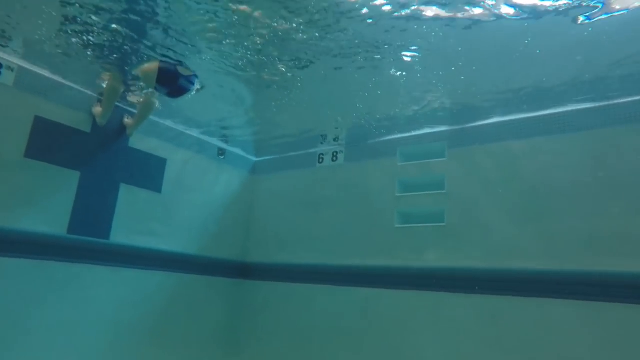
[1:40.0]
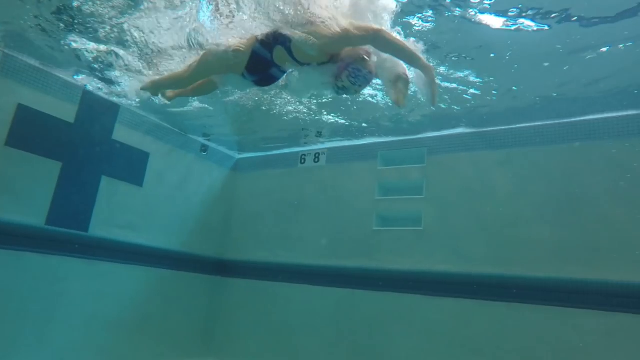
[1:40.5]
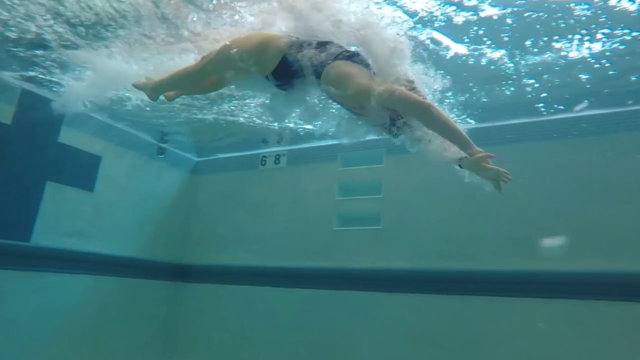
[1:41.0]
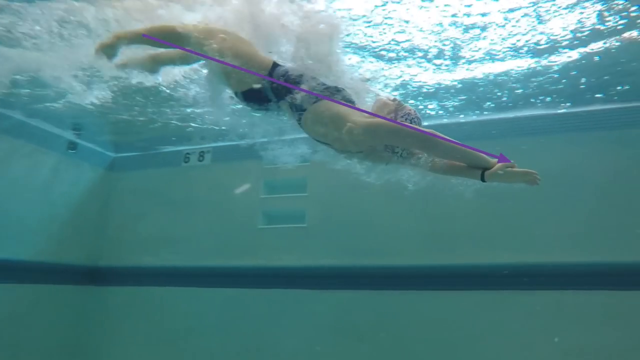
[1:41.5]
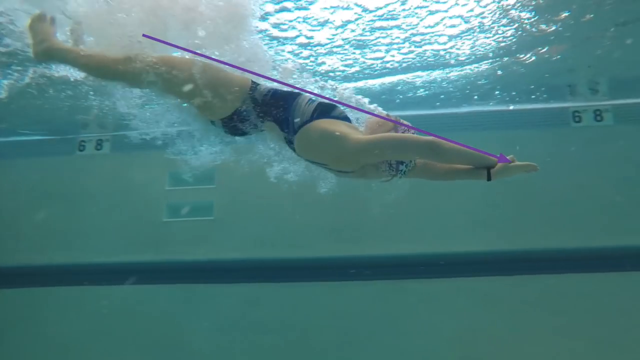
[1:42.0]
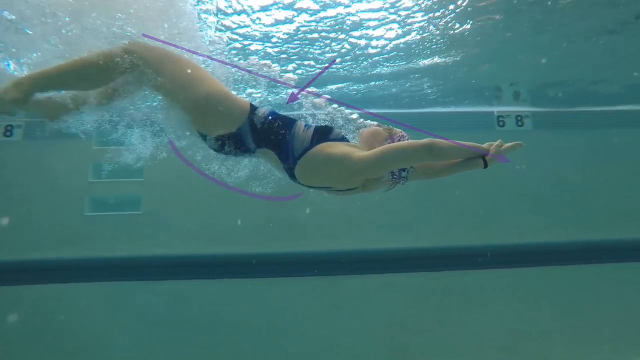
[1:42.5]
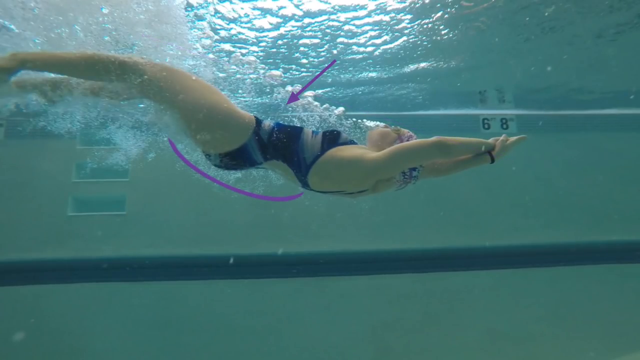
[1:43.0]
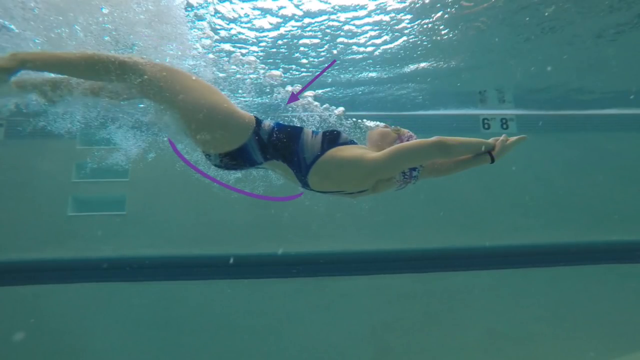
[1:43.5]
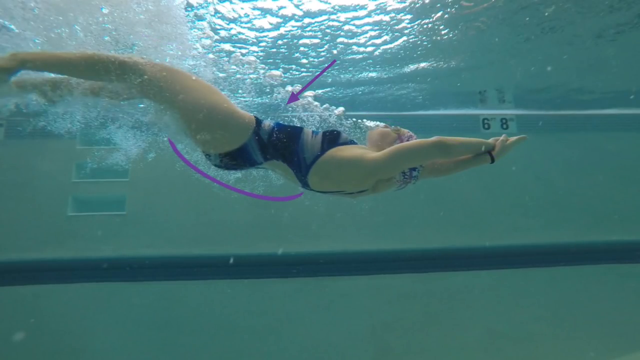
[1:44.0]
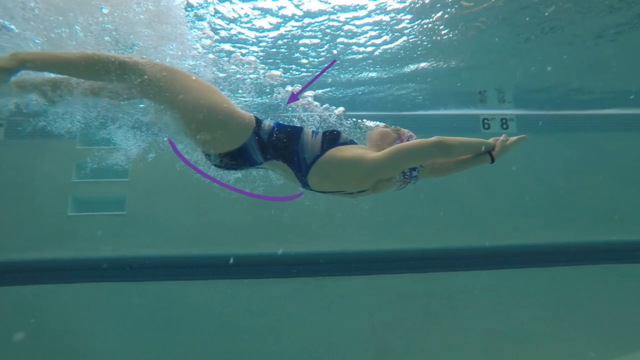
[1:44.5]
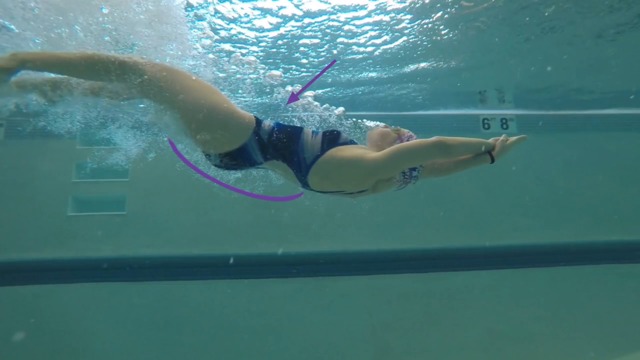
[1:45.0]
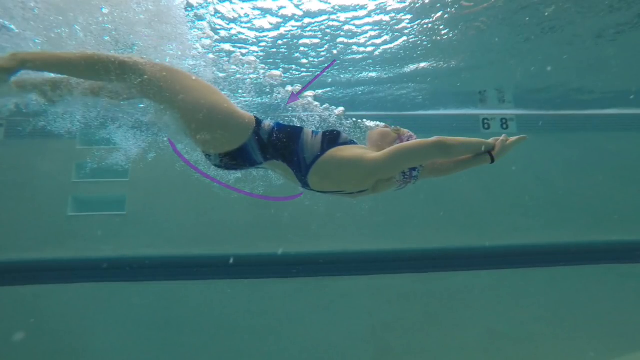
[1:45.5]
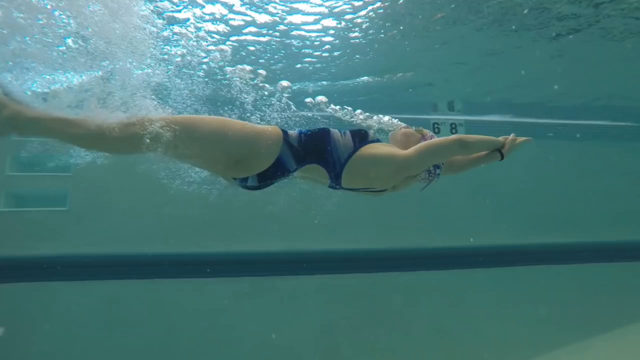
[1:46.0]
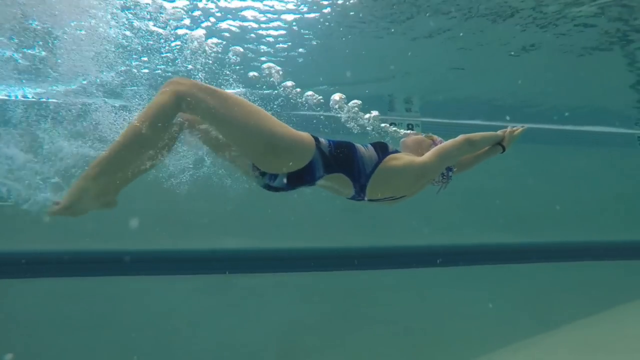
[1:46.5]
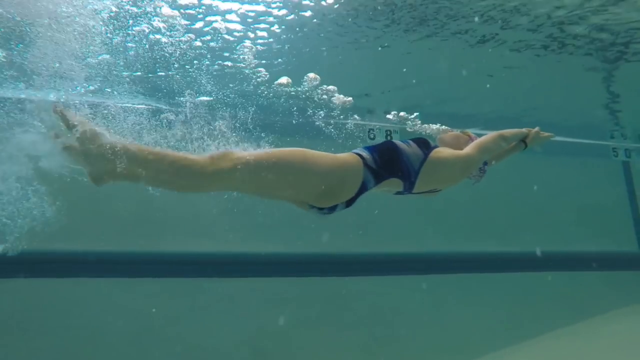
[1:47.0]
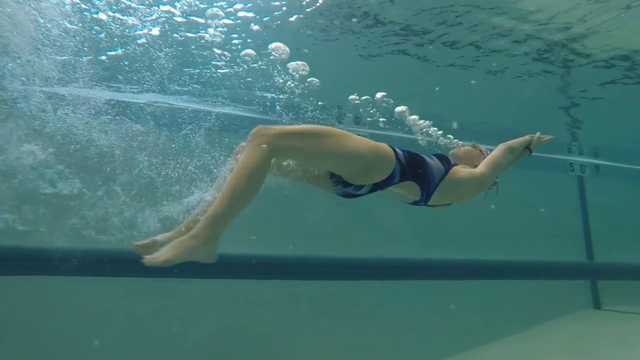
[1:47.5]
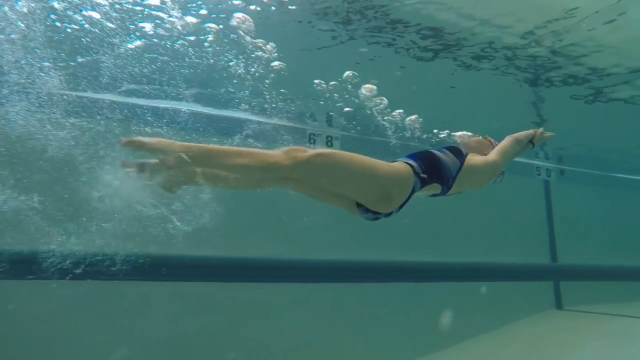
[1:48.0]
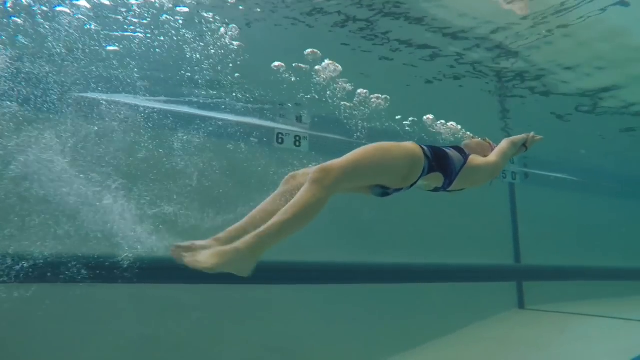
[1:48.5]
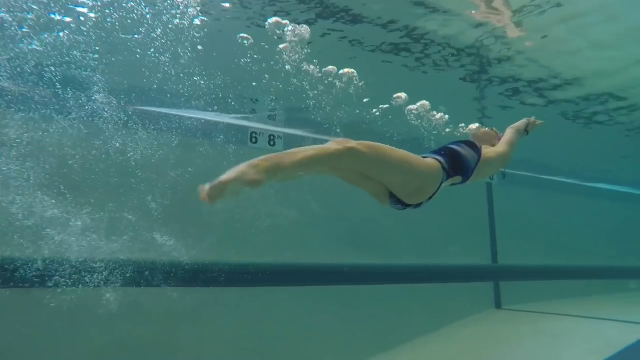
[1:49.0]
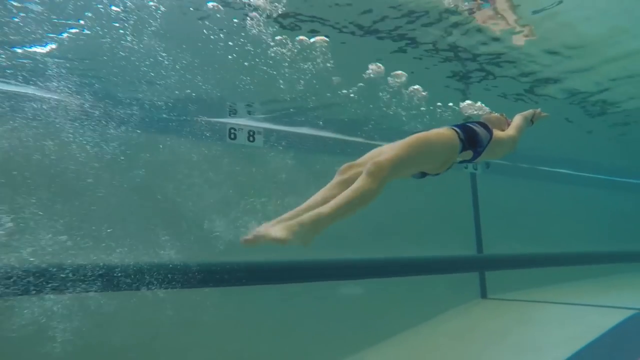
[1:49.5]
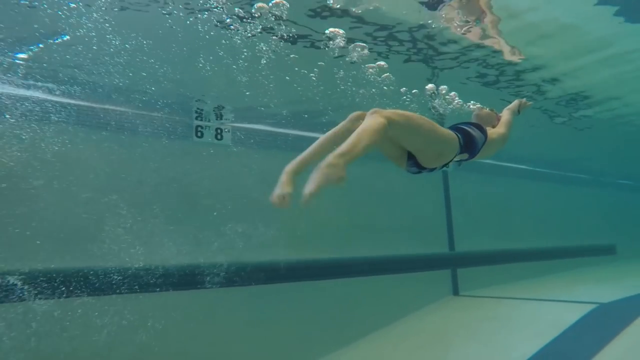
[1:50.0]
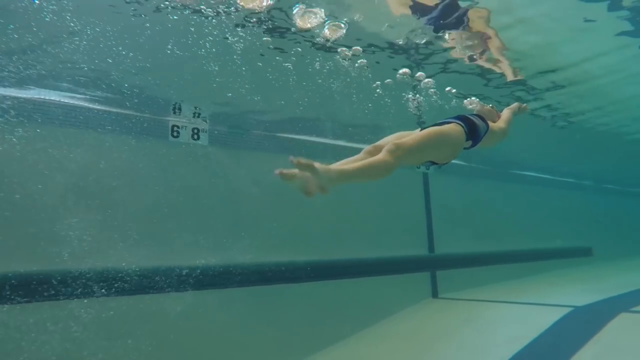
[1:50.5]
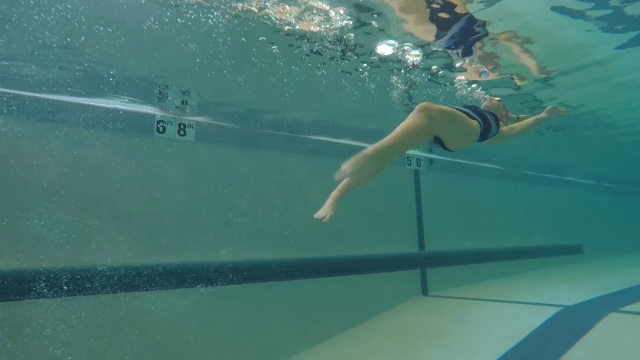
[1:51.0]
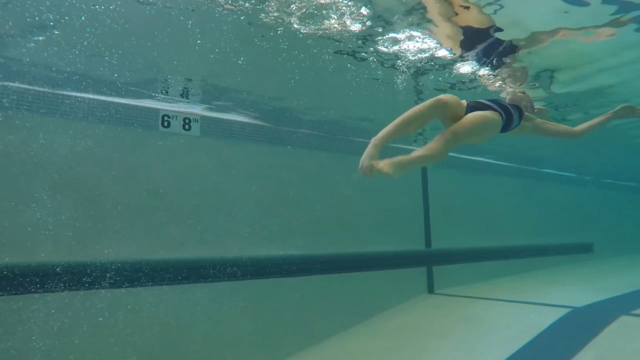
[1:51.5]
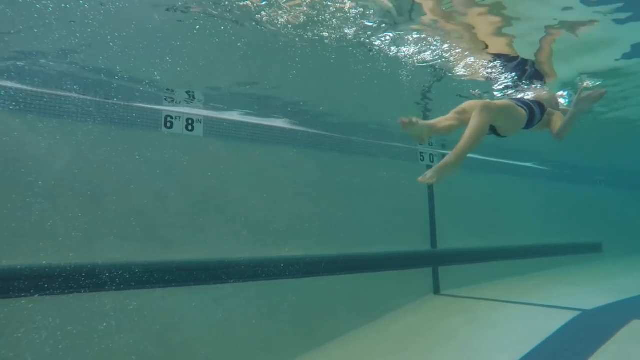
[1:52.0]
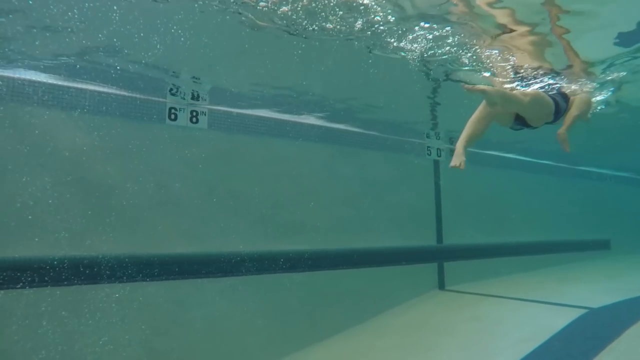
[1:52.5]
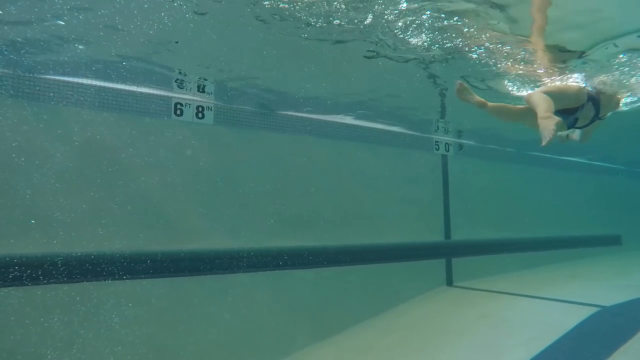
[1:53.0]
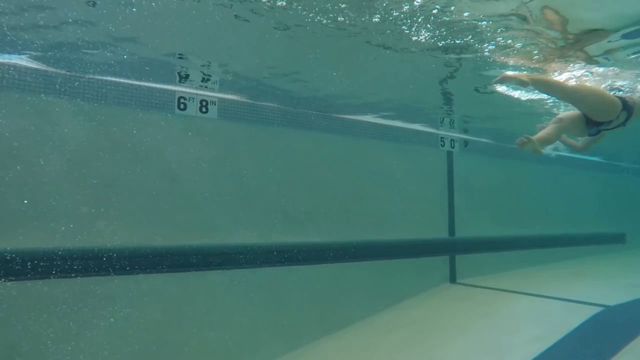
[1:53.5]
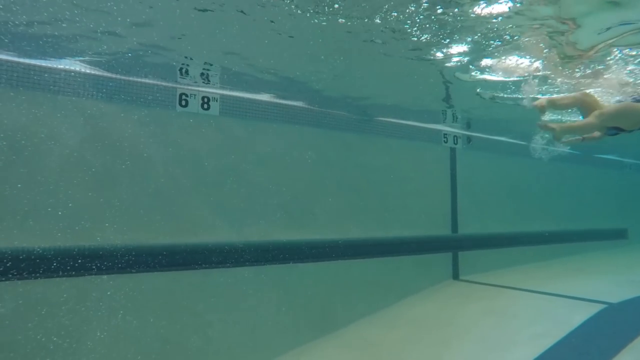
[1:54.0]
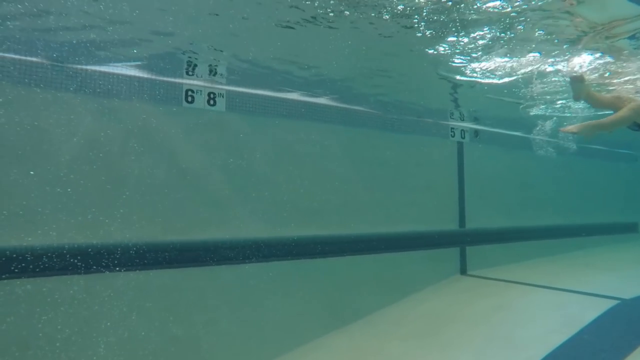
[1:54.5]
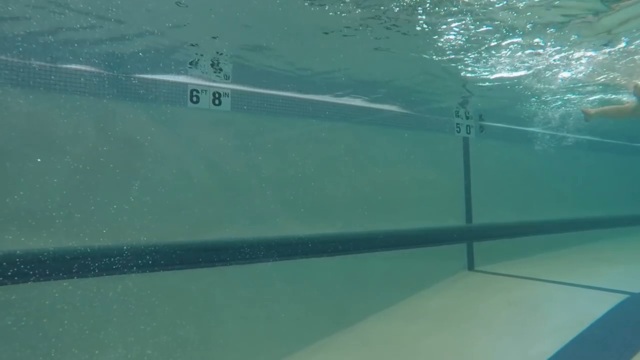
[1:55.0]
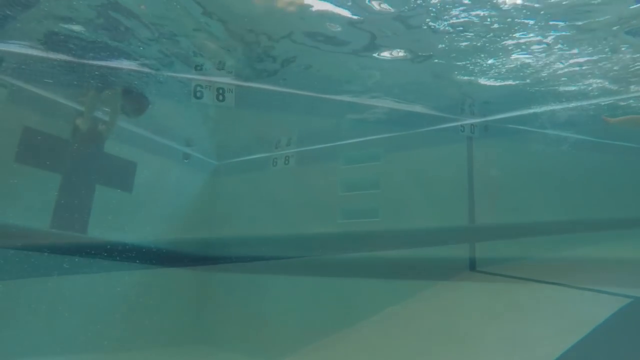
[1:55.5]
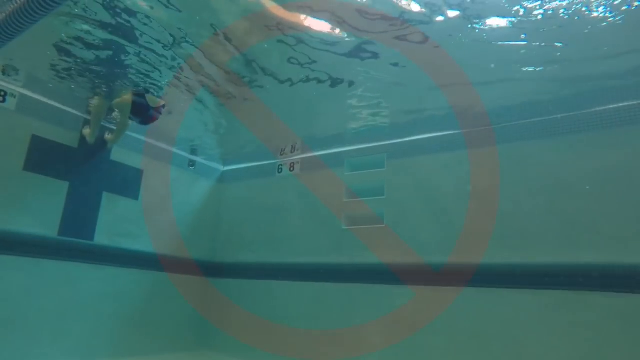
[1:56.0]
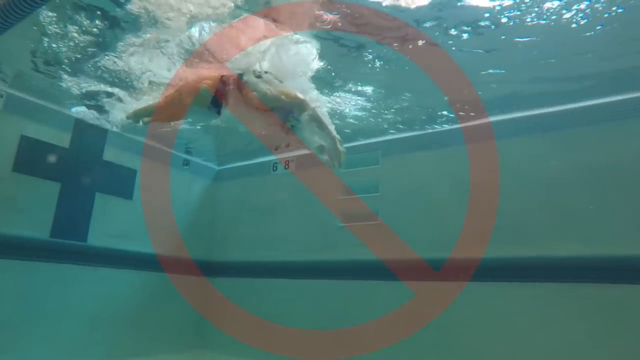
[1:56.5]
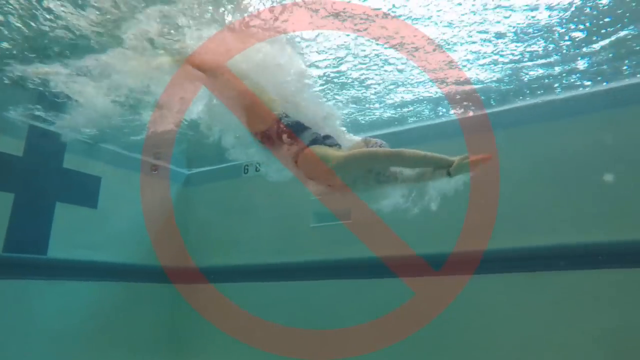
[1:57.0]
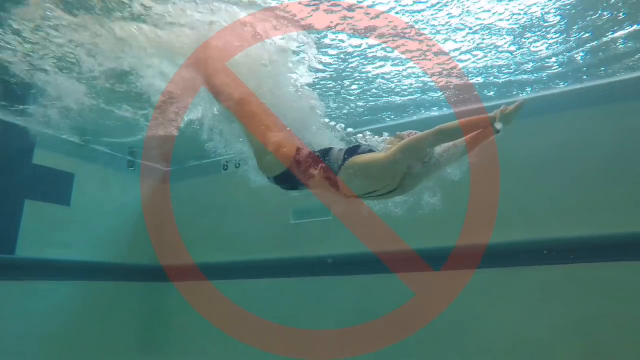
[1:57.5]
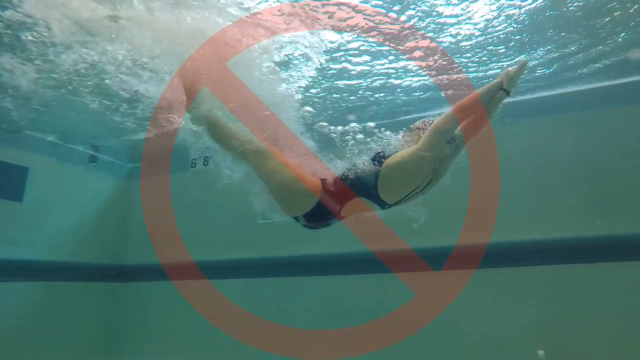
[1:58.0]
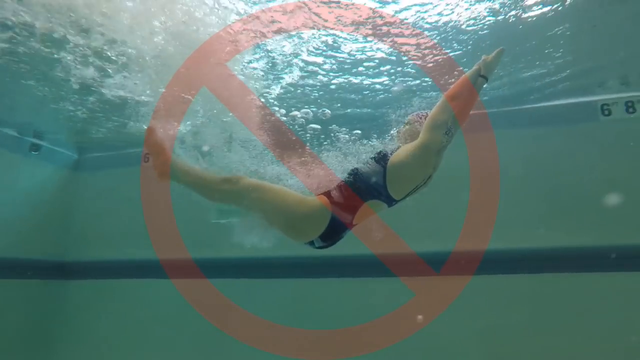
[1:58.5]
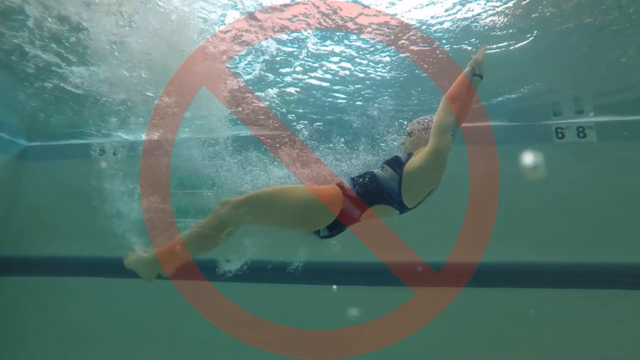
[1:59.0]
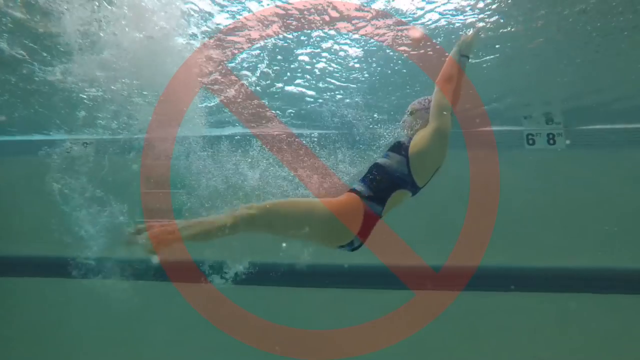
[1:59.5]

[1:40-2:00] The female swimmer is in the water with her feet pressed against the wall, her bottom in the water and her top half out of the water and out of view. She projects herself backward into the water; her top half enters with her arms stretched above her head, her hands clasped one over another with her fingers straight, and her legs straight with toes pointed. A purple line appears across her body, indicating her pencil-like form as she enters the water. It then switches to a rounded line beneath her bottom and spine showing the curvature of her spine, with a purple arrow pointing at her abdomen, showing that as she enters the water she begins to curve upward toward the surface. She keeps her arms outstretched above her head and her thighs clasped together while her calves and feet propel her forward. She exhales, with bubbles coming out of her mouth and rising toward the surface as she continues toward the back half of the pool. She then brings her nose and mouth out of the water while her body stays submerged.